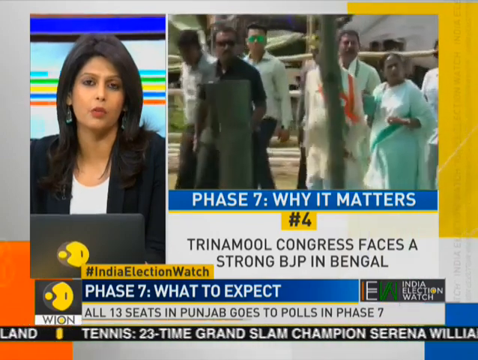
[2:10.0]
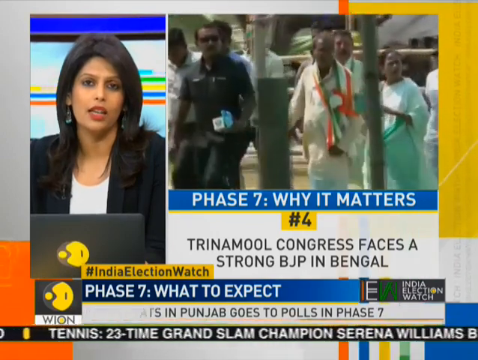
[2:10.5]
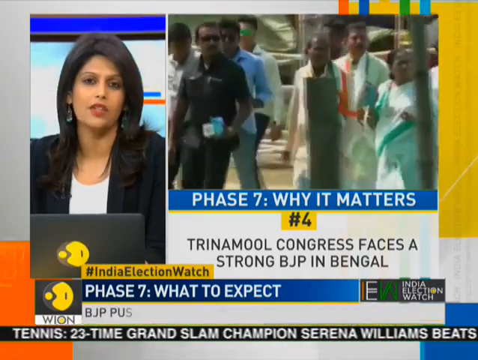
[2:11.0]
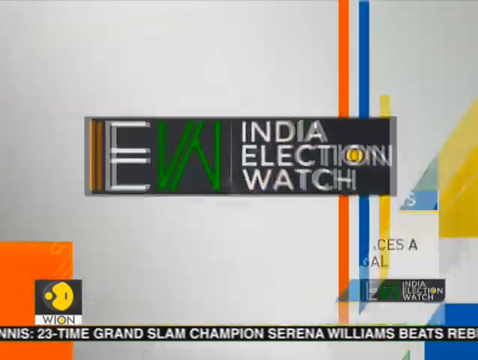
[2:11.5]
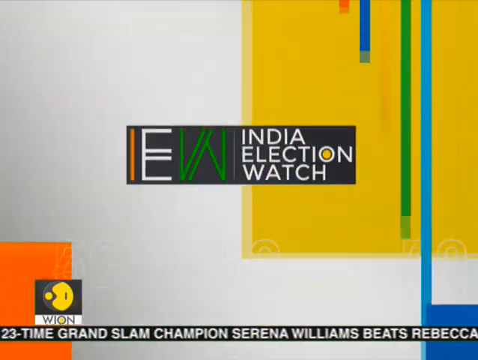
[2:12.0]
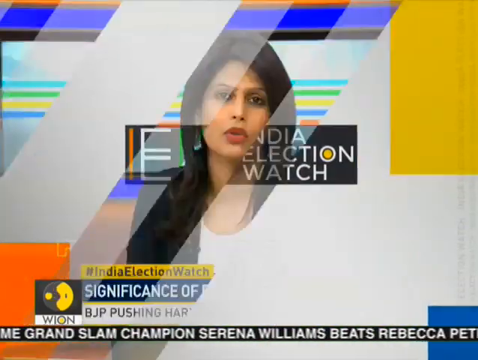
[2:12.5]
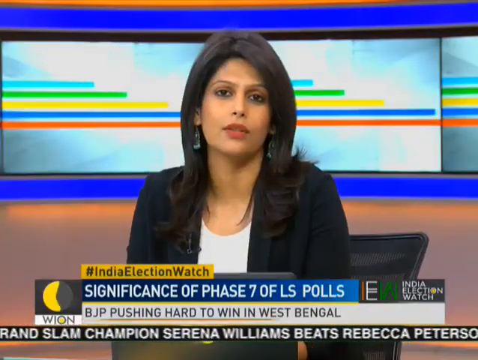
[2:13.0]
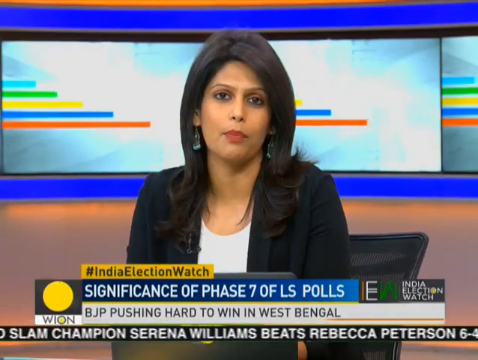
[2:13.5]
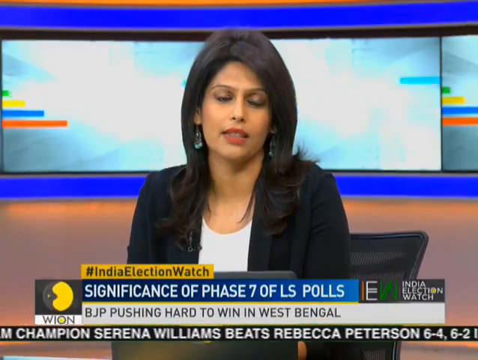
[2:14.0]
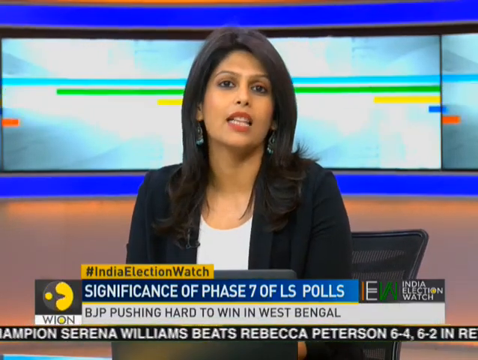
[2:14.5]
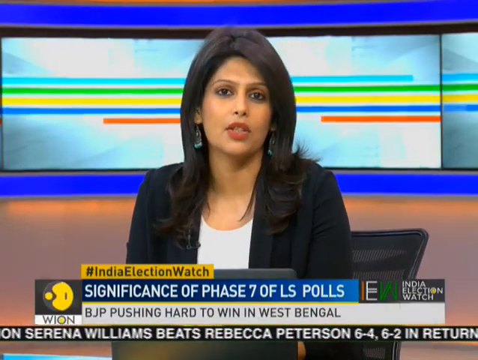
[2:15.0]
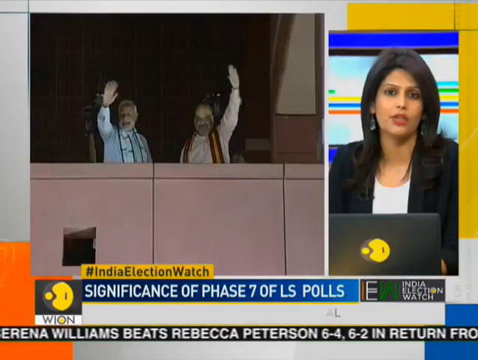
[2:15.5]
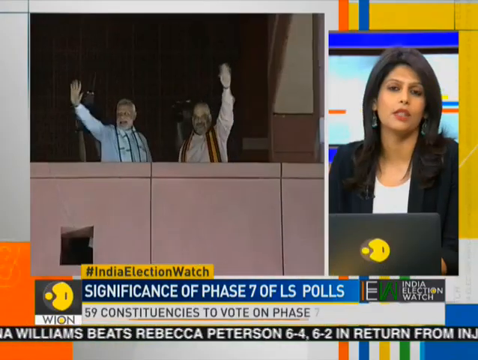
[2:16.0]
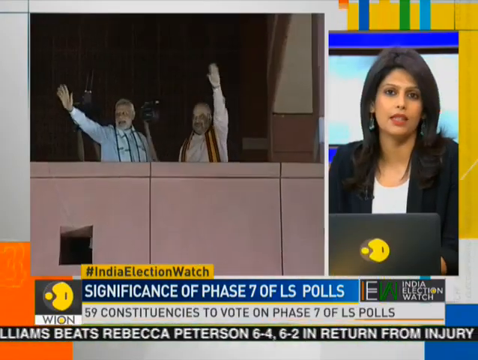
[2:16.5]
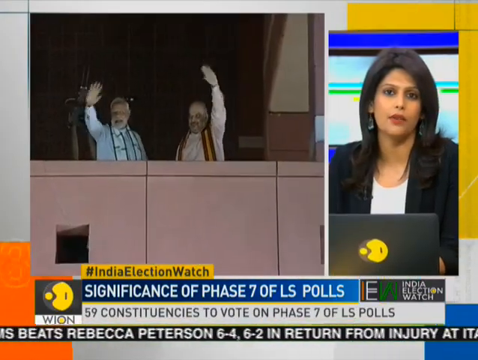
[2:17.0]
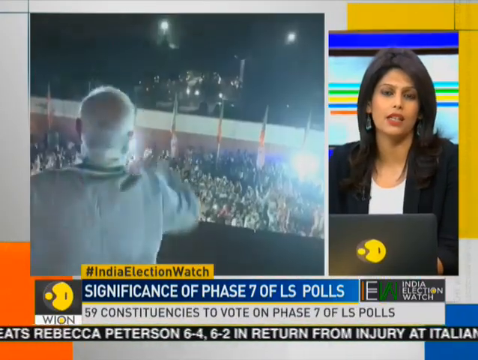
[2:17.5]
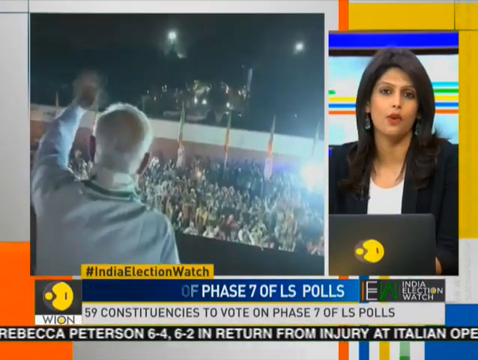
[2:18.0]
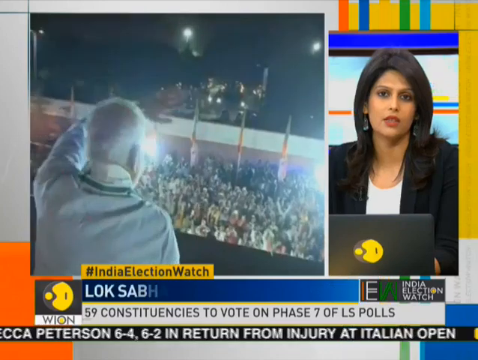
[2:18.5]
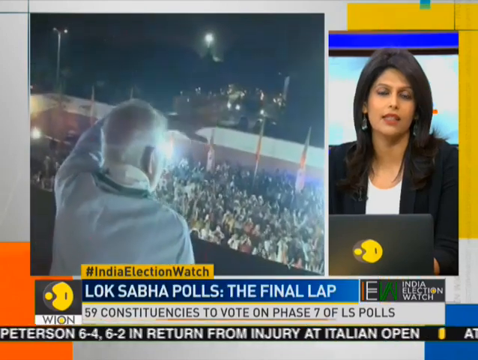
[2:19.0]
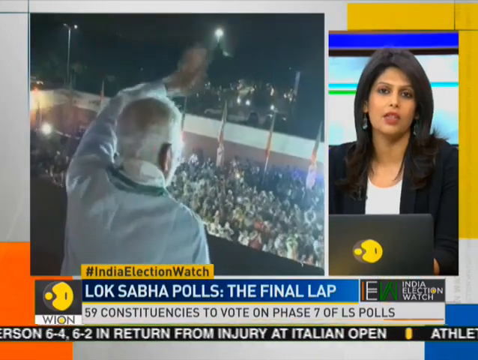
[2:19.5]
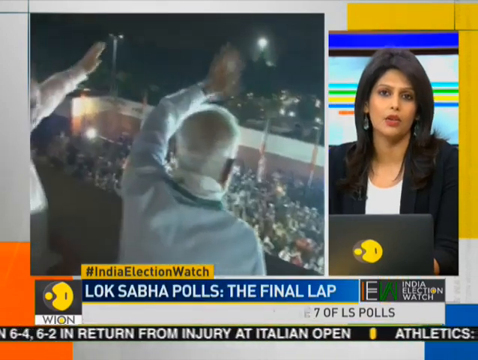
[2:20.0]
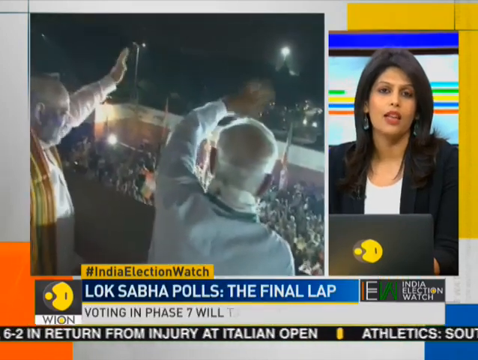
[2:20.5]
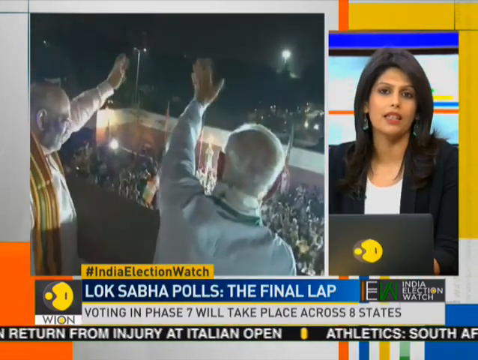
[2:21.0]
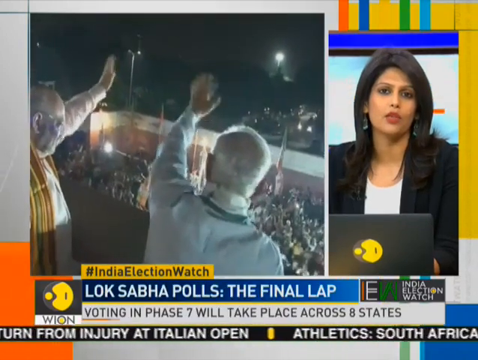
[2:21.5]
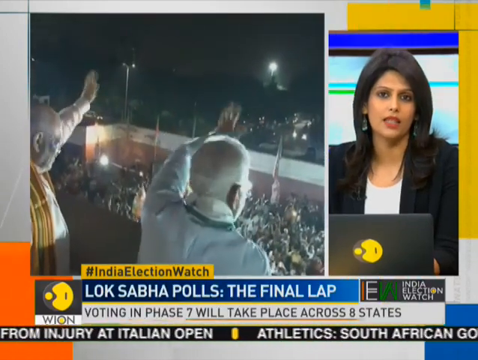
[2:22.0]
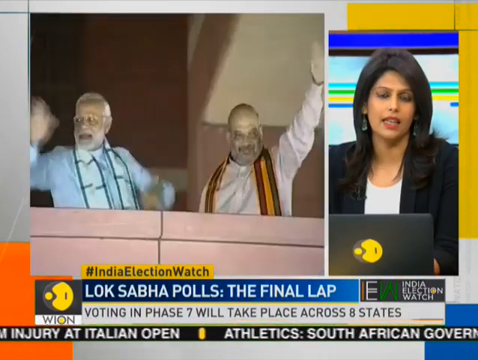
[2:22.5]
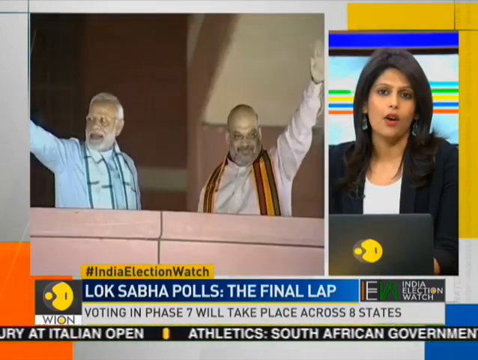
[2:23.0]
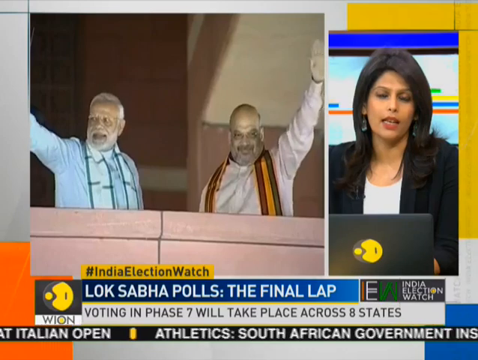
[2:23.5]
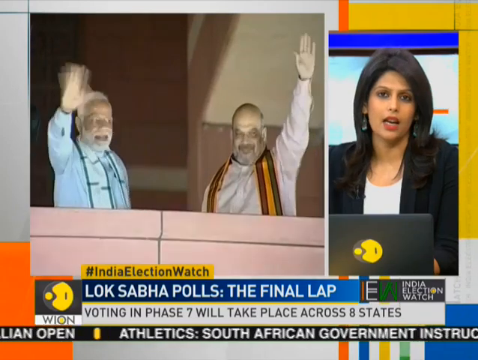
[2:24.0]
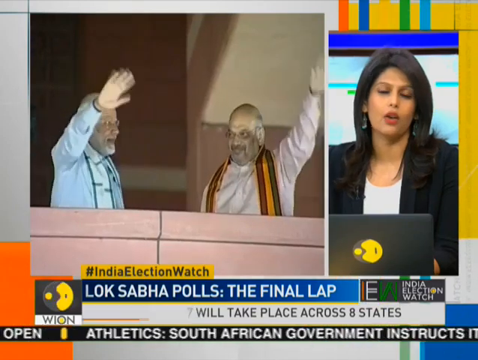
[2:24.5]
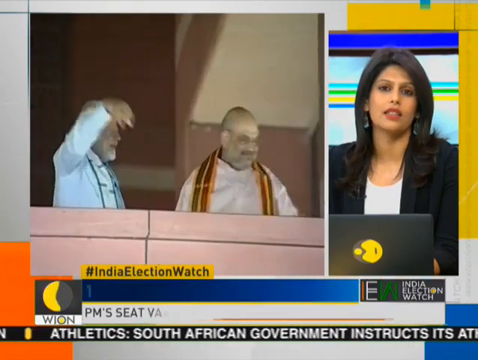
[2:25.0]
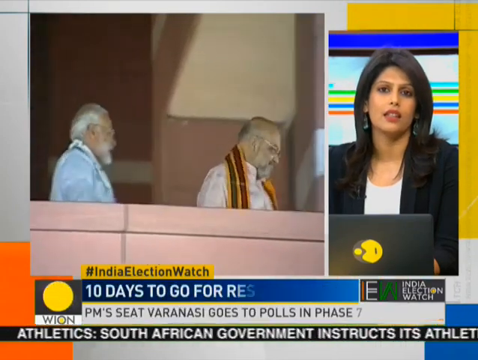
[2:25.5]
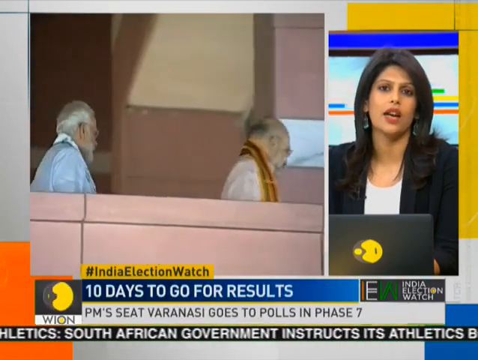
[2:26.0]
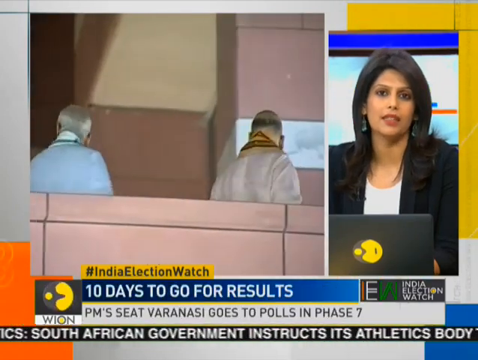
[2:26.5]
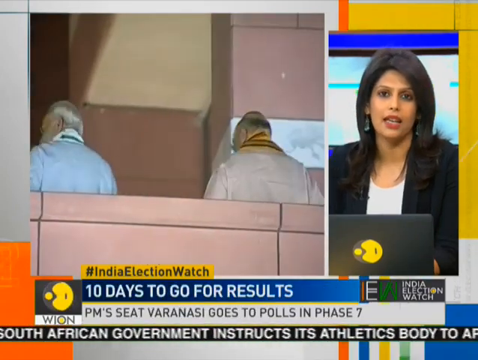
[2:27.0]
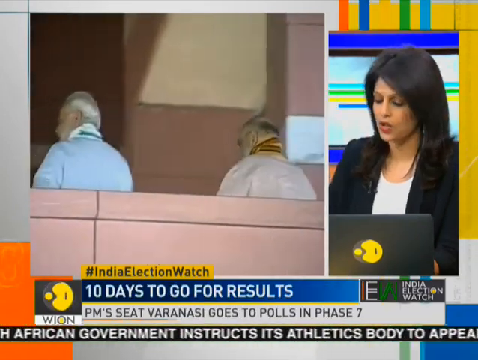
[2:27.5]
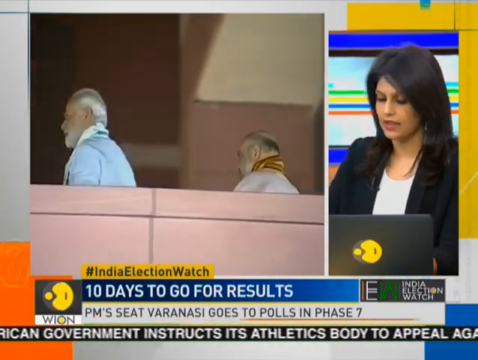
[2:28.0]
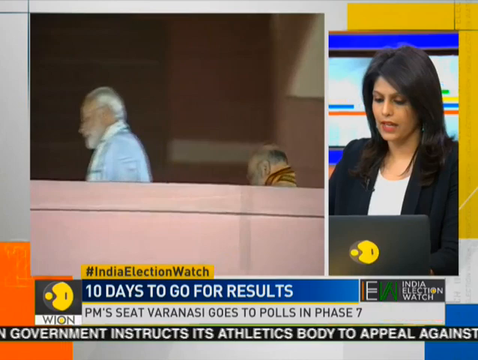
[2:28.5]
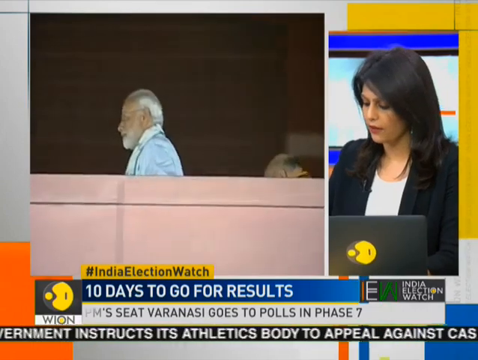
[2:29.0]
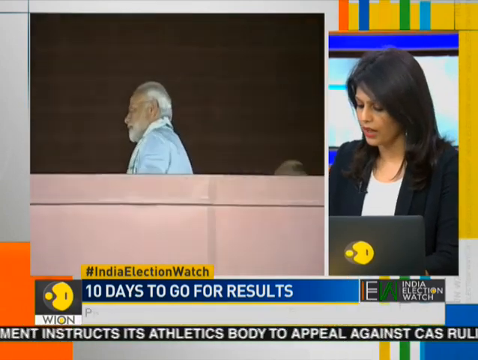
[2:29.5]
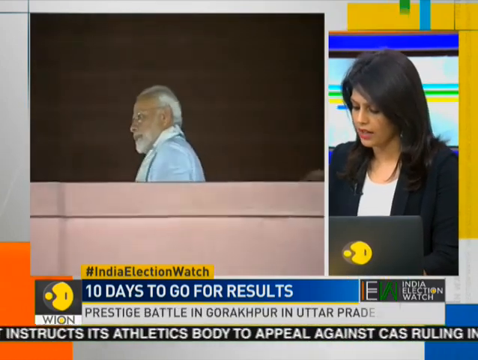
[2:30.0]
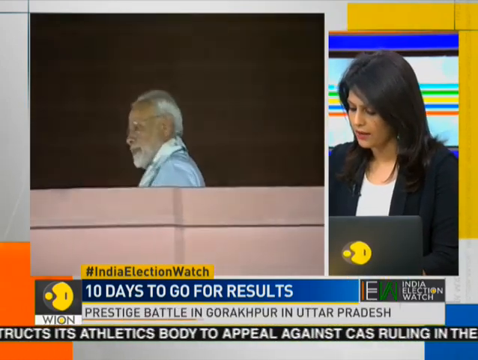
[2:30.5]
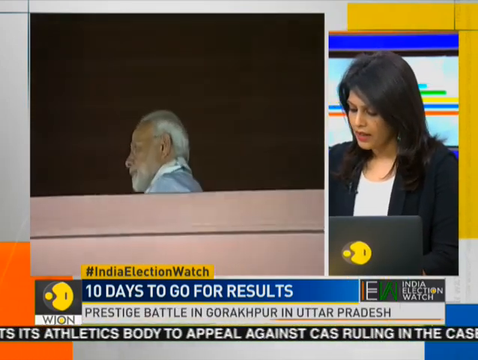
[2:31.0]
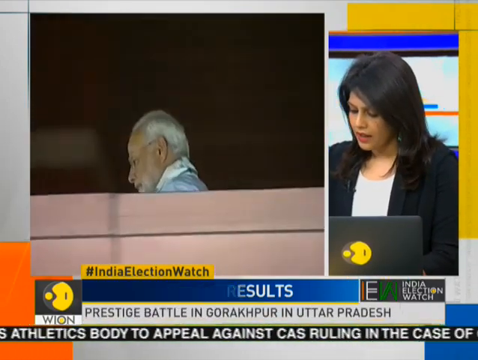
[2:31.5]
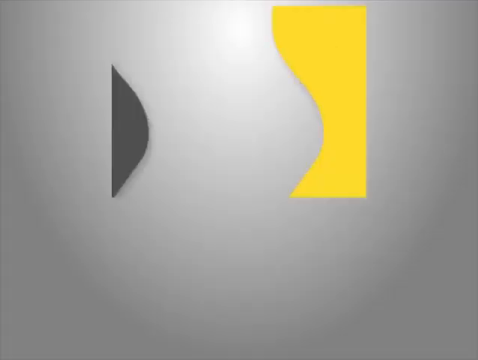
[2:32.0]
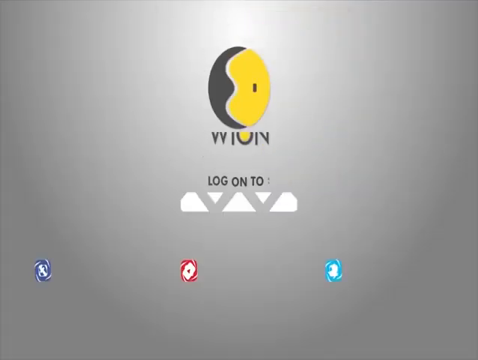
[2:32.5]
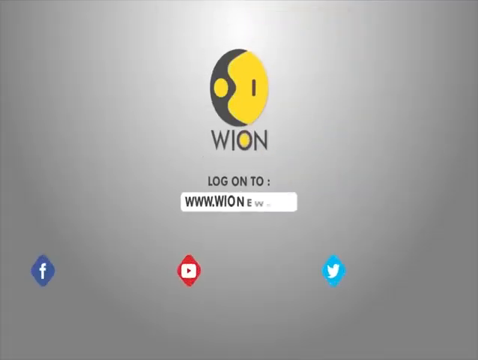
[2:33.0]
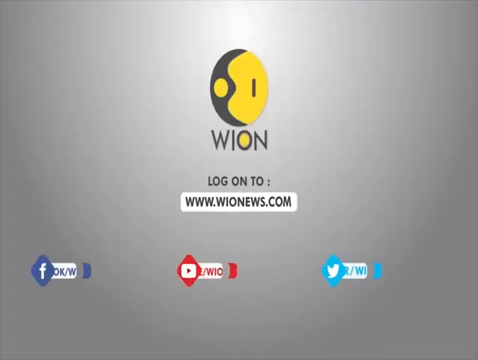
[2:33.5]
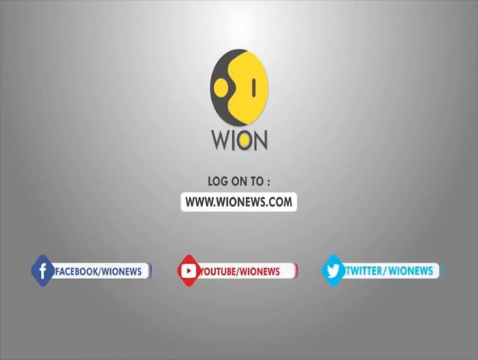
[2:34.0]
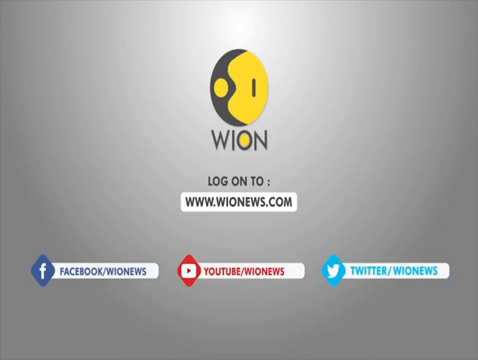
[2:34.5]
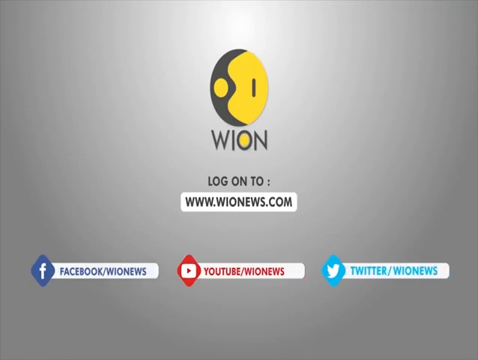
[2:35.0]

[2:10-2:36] The anchor is still on the left side, with other videos on the right, and the text "#4, Trinamol Congress faces a strong BJP in Bengal." The broadcast returns to the newsroom, where the anchor is in the same black coat and white top and the background is the same: a screen with graphs in red, blue, yellow, green and light blue. She still has the laptop and is seated on the chair, looking at the camera while speaking. Her frame then moves to the right, and a bigger frame on the left shows two gentlemen waving to the crowd at night with the lights on, and two policemen behind them. They move, and the gentlemen's backs are visible. The video ends on a WeOn screen showing "www.weonnews.com" and the handles Facebook "WeOnNews," YouTube "WeOnNews" and Twitter "WeOnNews."